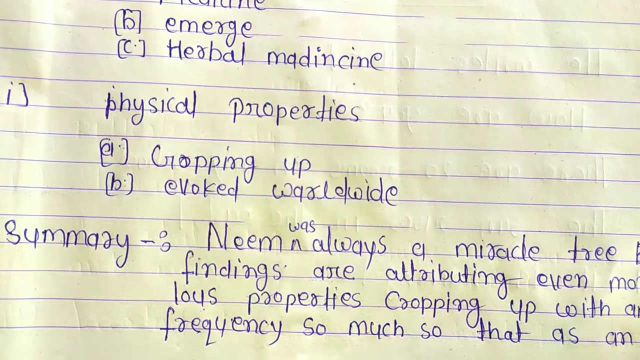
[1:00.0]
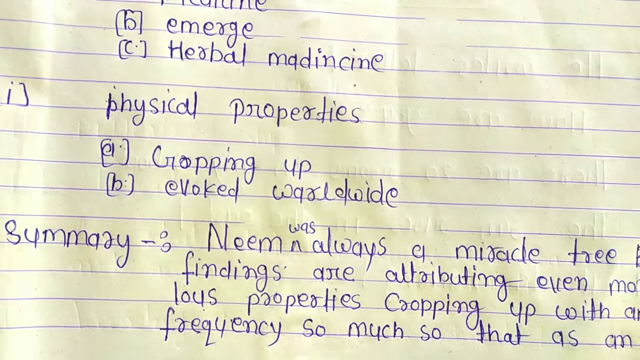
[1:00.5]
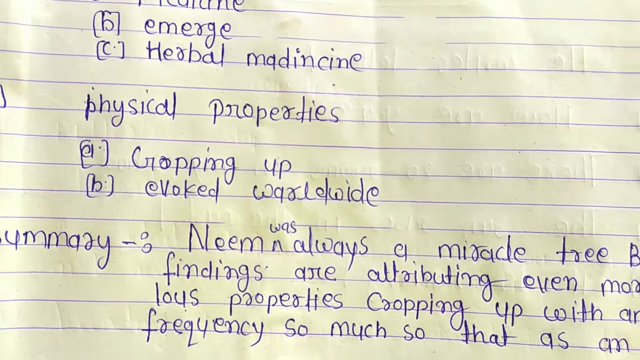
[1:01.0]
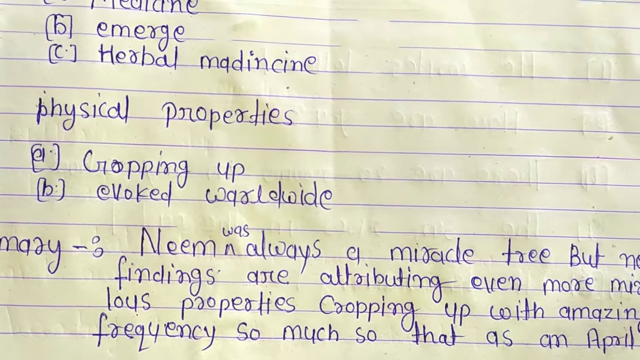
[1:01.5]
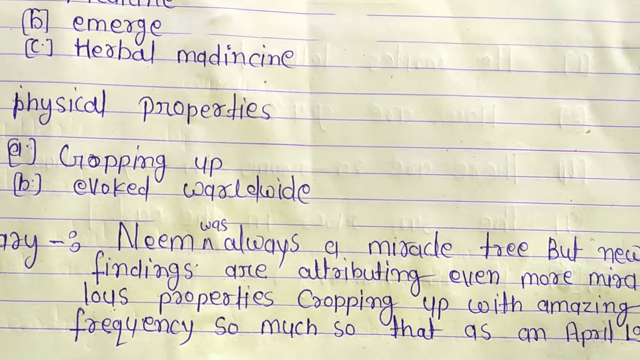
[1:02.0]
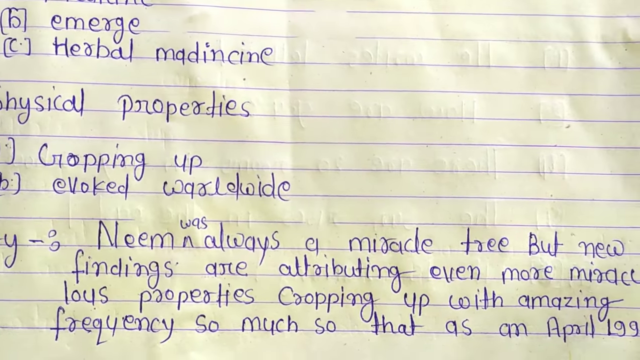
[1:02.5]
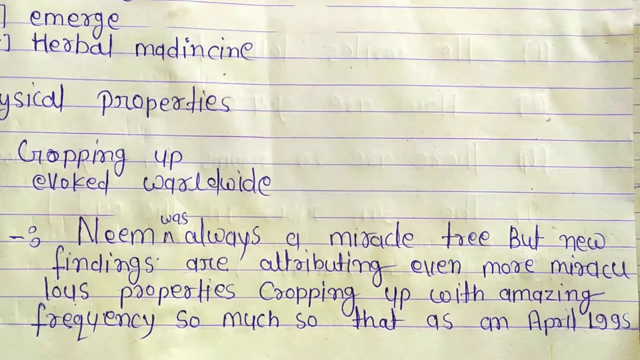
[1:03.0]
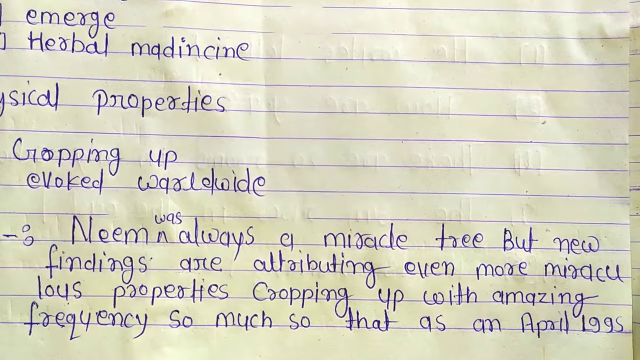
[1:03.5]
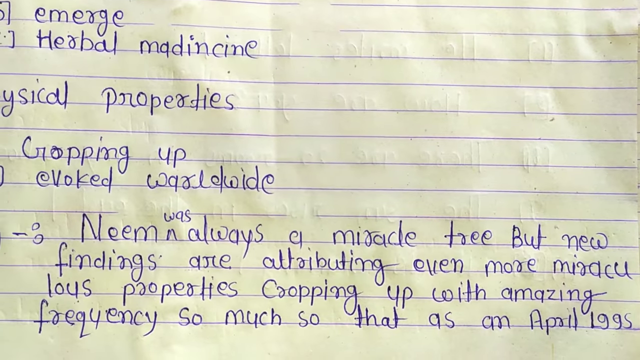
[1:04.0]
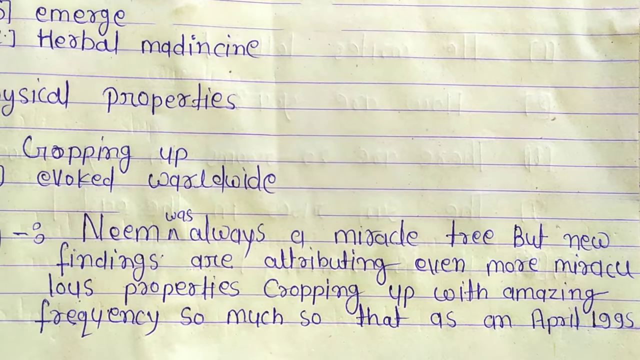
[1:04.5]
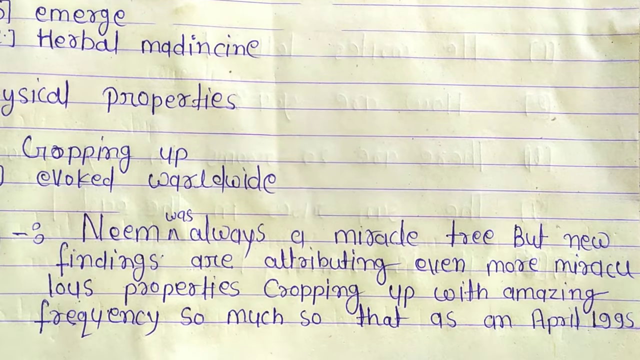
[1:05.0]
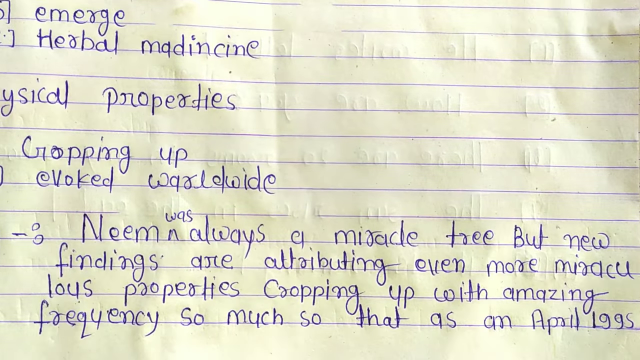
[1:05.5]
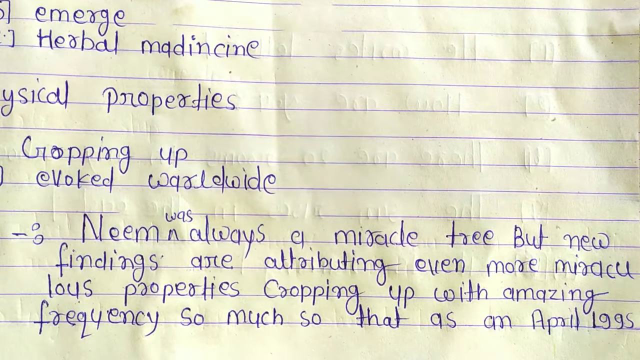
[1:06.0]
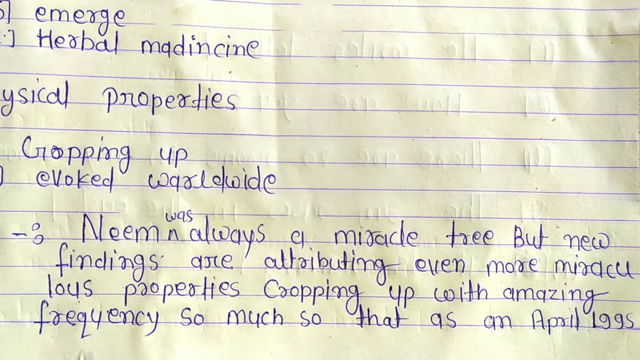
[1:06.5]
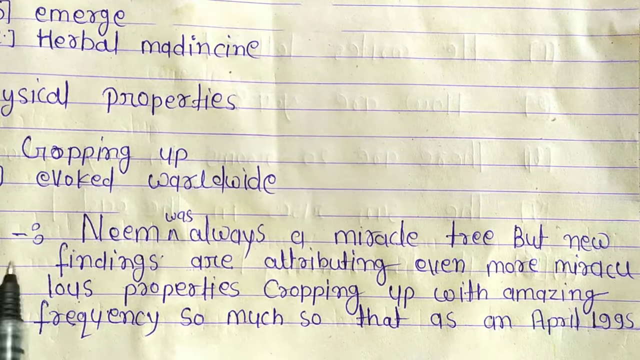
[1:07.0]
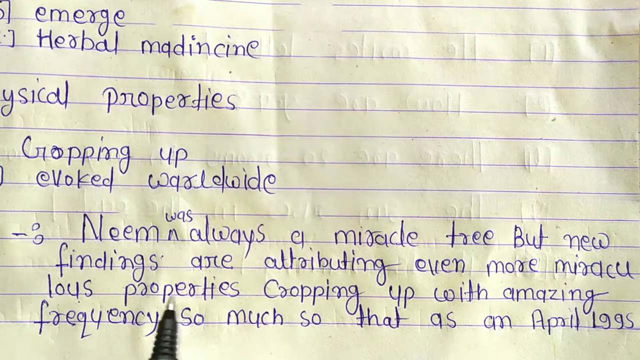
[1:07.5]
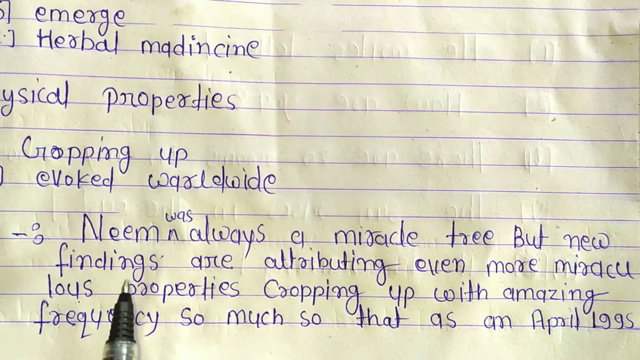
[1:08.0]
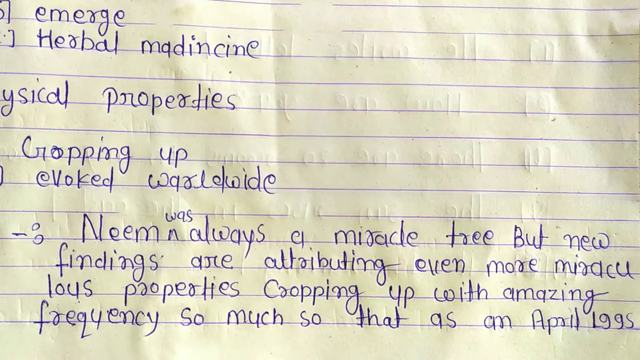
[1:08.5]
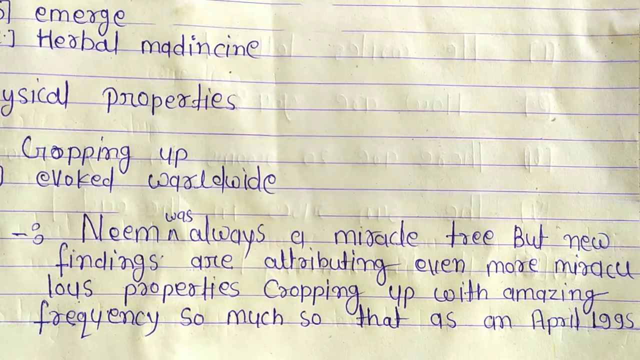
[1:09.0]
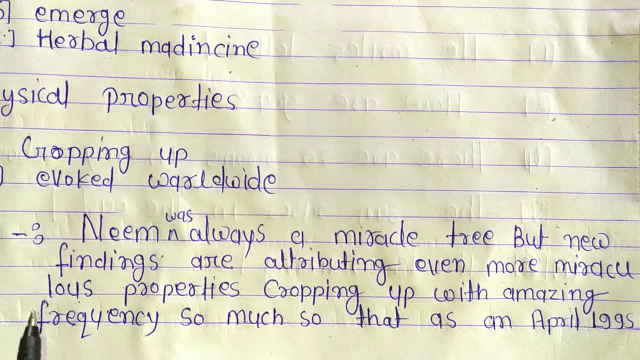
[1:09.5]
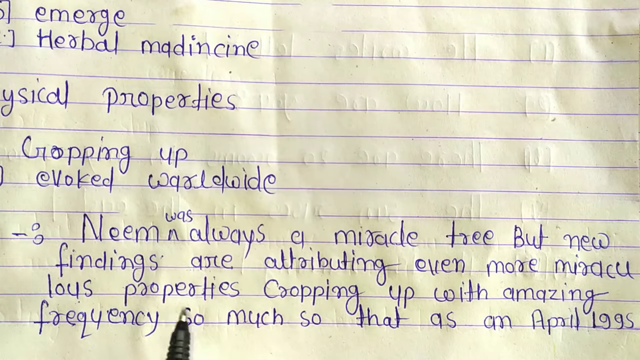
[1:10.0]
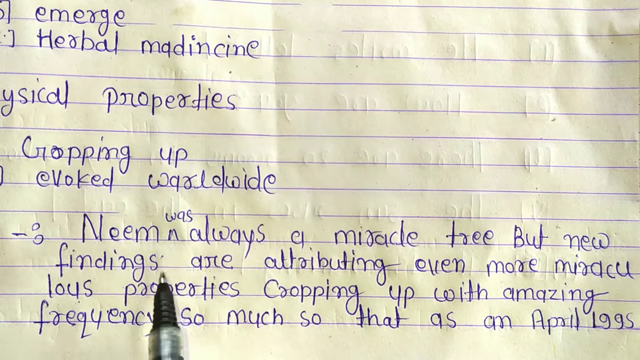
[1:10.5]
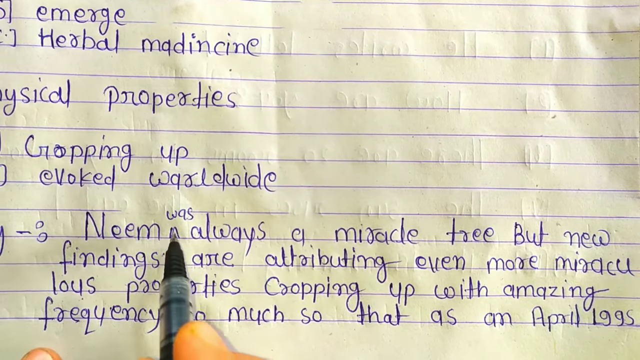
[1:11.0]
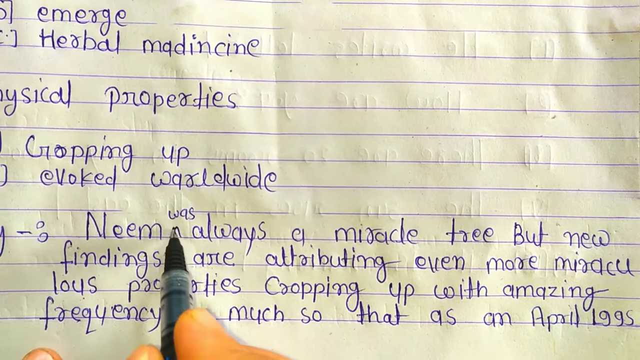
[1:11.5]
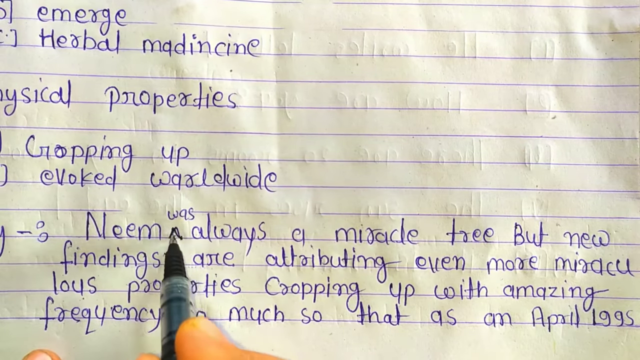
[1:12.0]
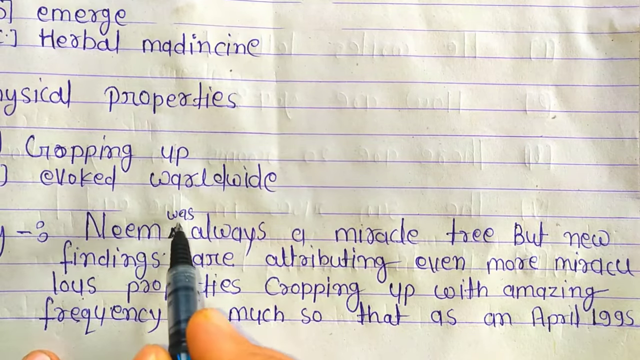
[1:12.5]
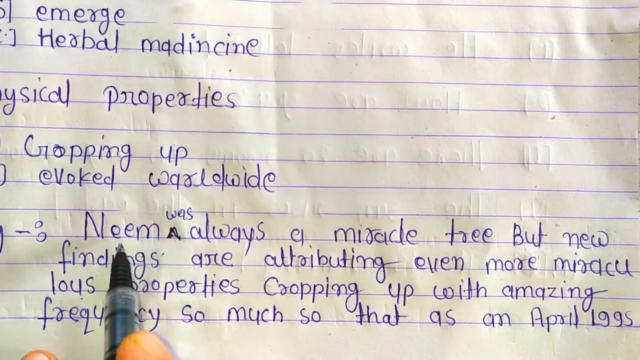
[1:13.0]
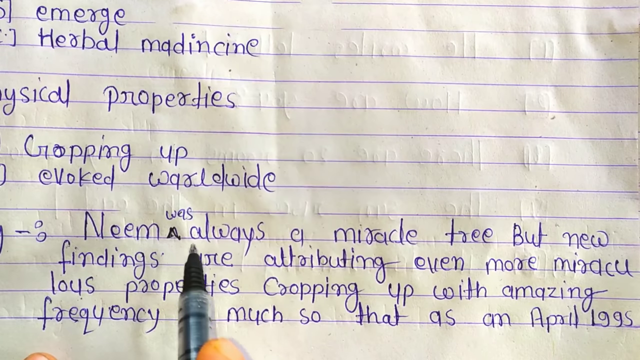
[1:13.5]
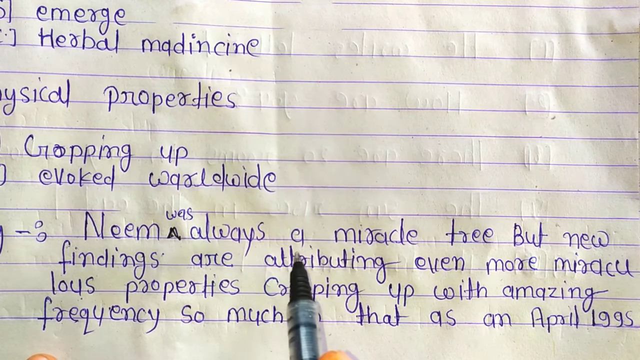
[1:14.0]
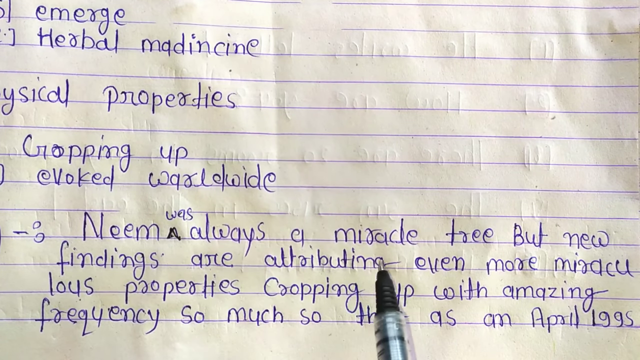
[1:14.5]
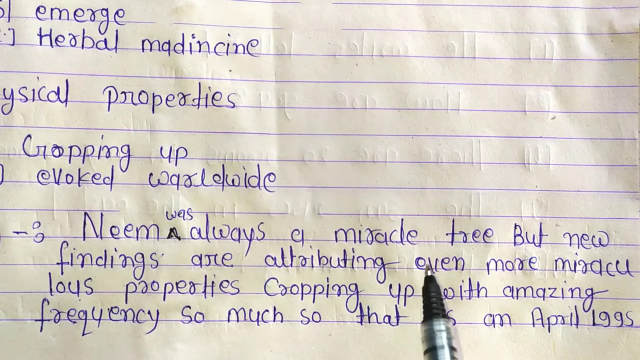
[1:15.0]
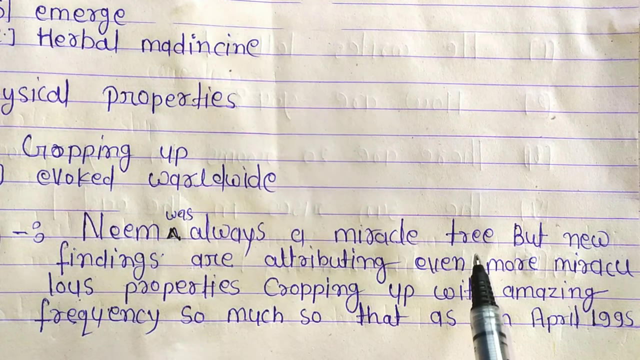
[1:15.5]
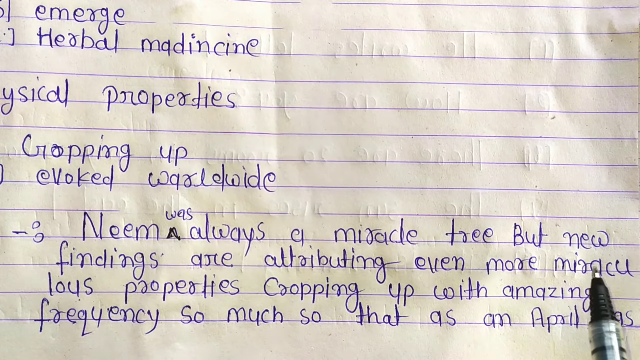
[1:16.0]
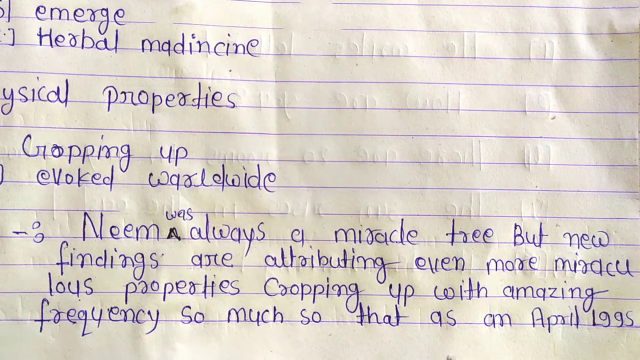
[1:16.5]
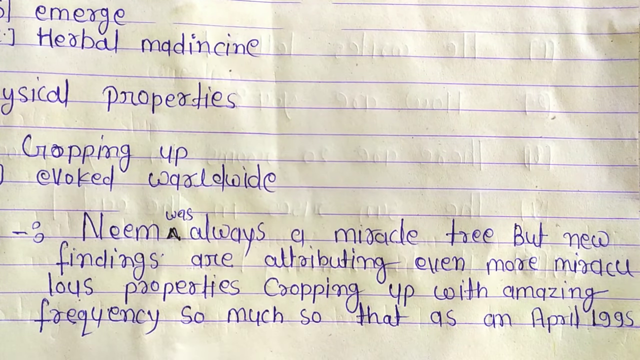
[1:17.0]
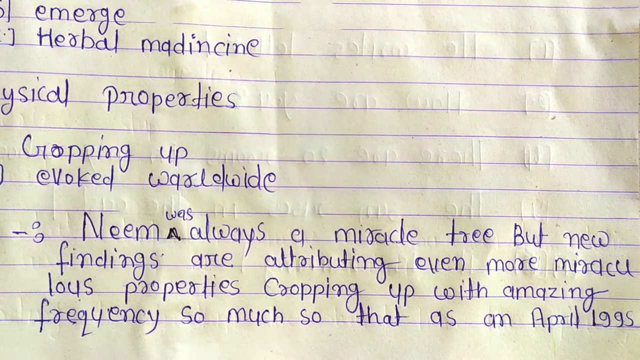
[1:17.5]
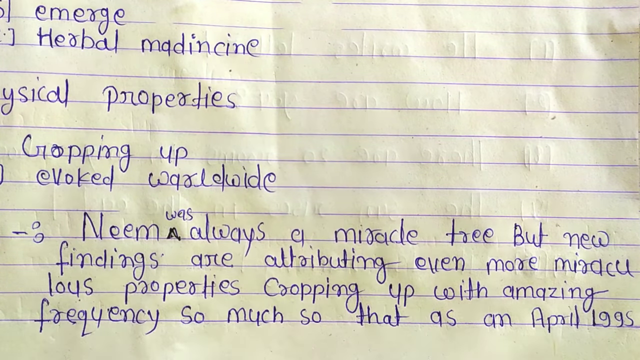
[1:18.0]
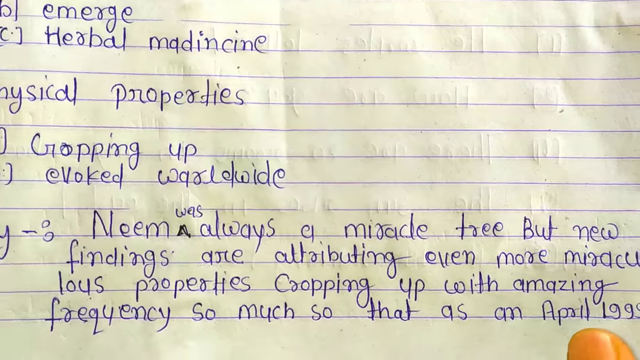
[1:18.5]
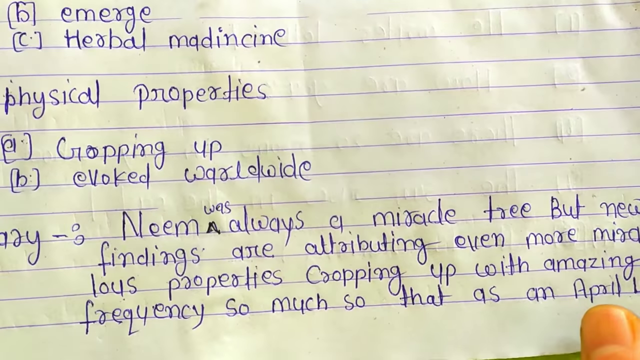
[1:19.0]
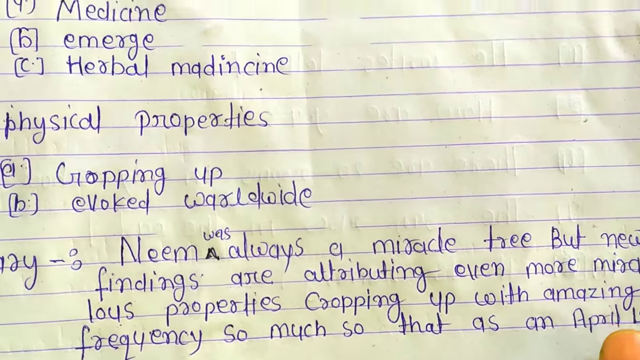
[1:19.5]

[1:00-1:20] The summary is shown, reading "Neem was always a miracle tree, but new finds are attributing even more miraculous properties, cropping up with amazing frequency, so much so that as in April 1995". A black pen moves around, the person's right thumb is visible, and the paper moves down a little. The person appears to be explaining the notes detail by detail, and the paper seems to be adjusted to follow wherever the pen is.